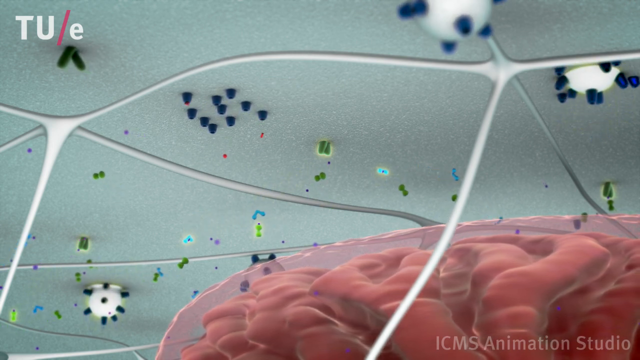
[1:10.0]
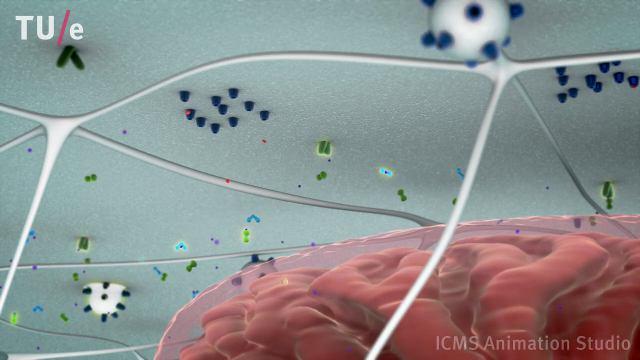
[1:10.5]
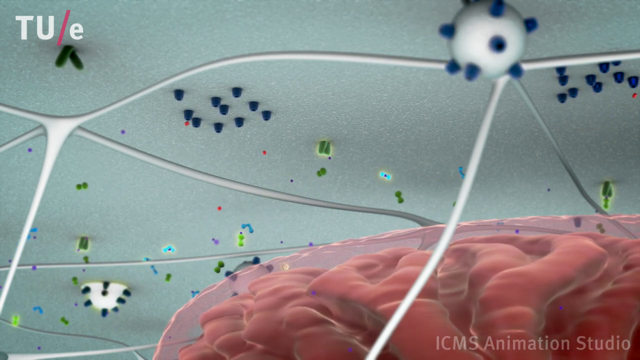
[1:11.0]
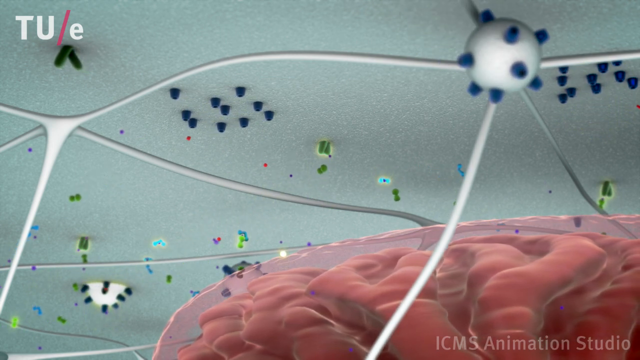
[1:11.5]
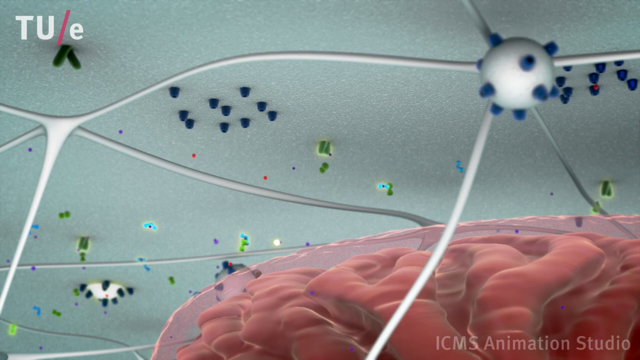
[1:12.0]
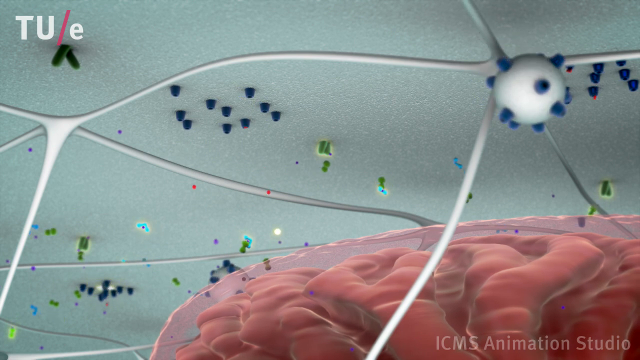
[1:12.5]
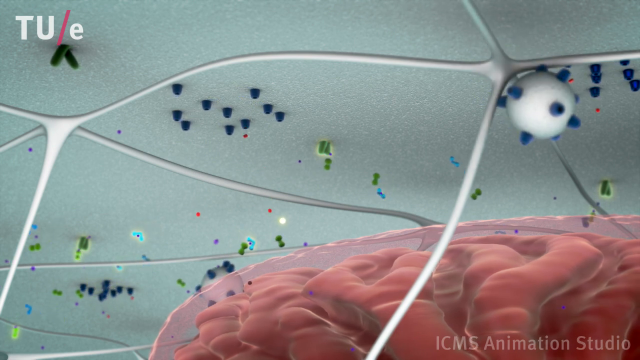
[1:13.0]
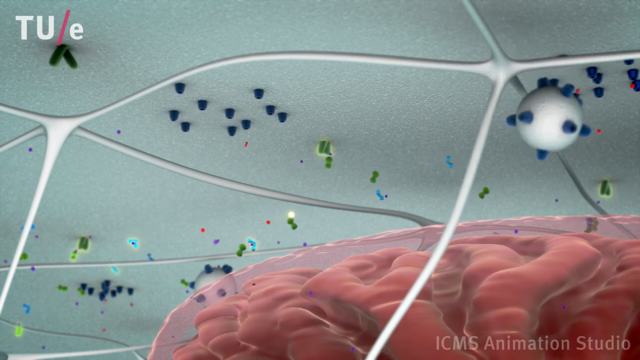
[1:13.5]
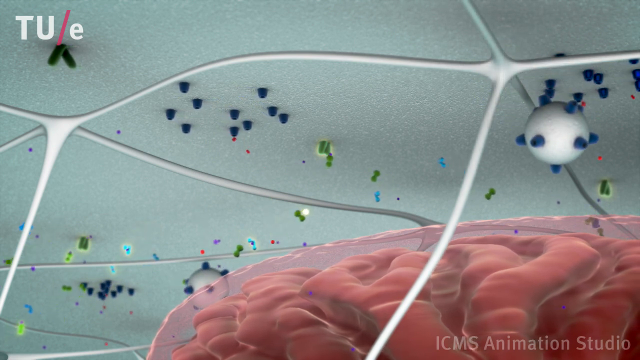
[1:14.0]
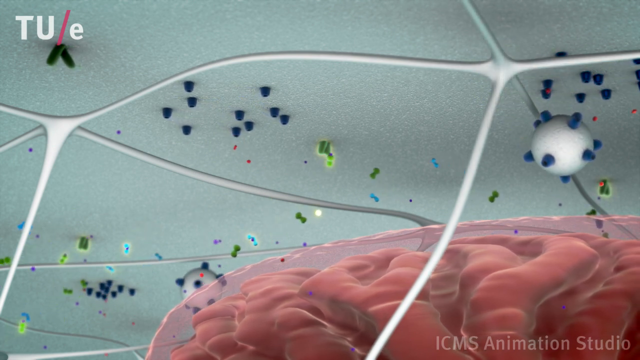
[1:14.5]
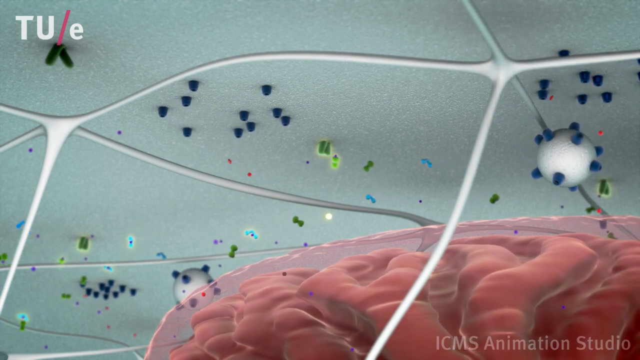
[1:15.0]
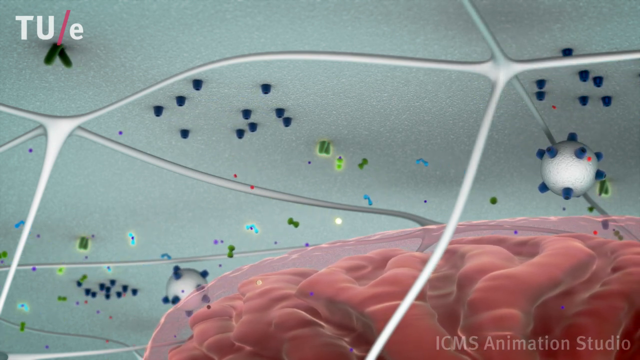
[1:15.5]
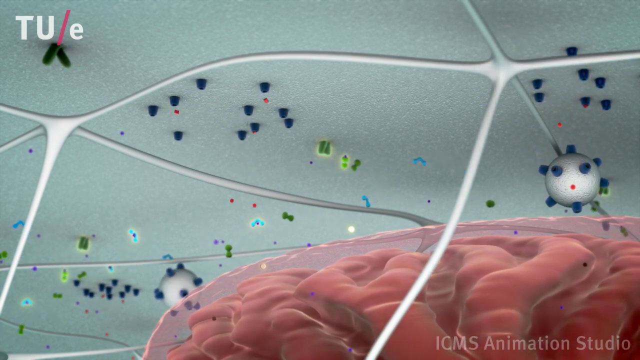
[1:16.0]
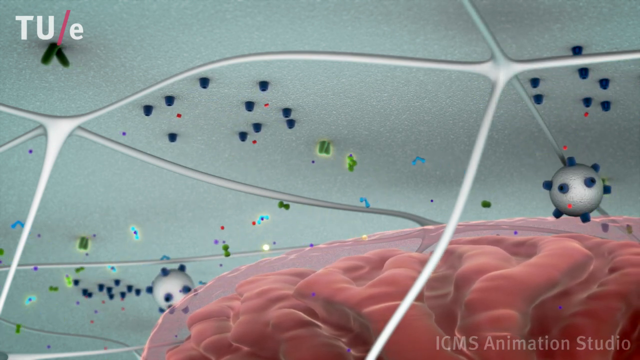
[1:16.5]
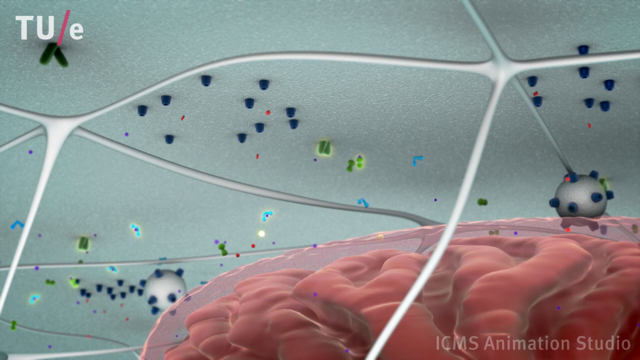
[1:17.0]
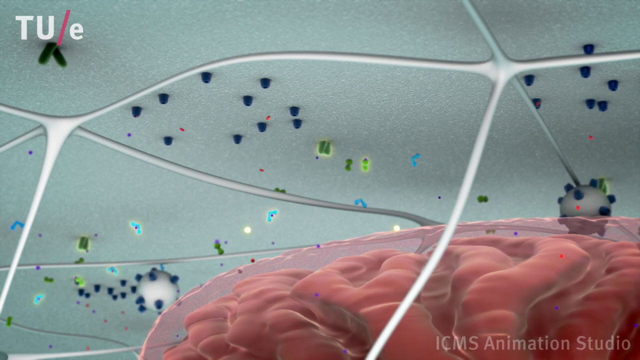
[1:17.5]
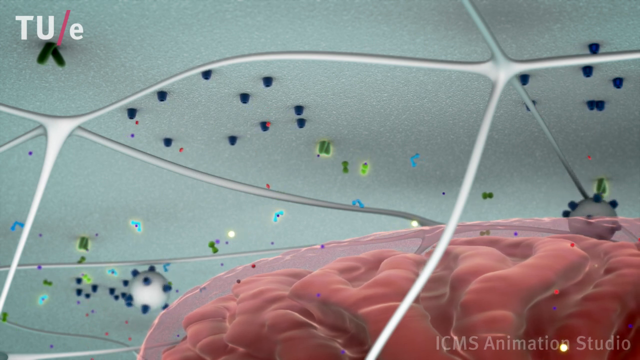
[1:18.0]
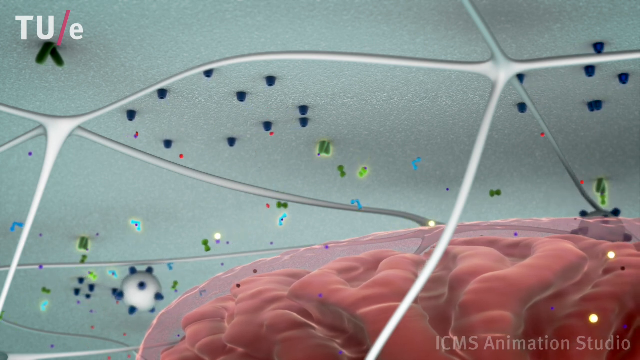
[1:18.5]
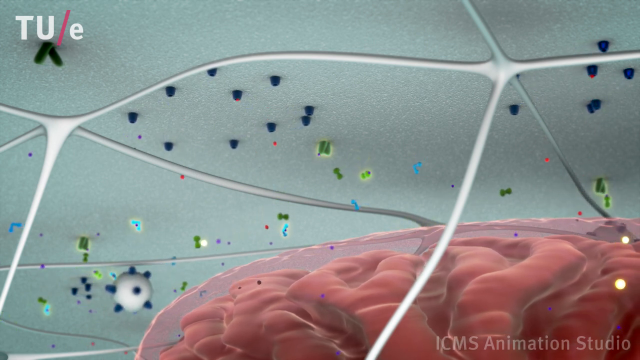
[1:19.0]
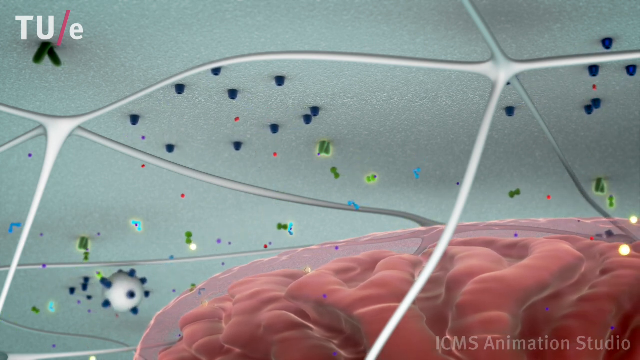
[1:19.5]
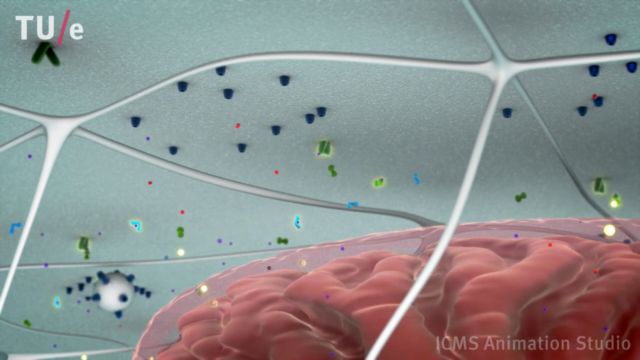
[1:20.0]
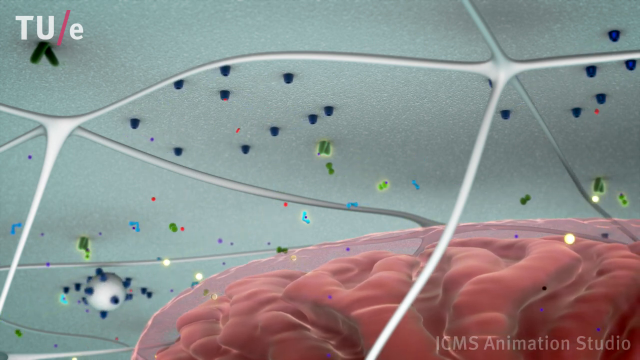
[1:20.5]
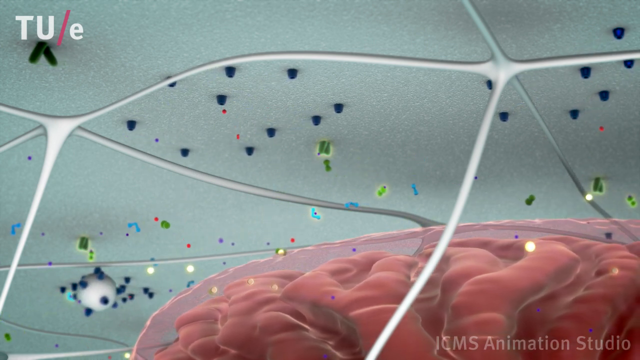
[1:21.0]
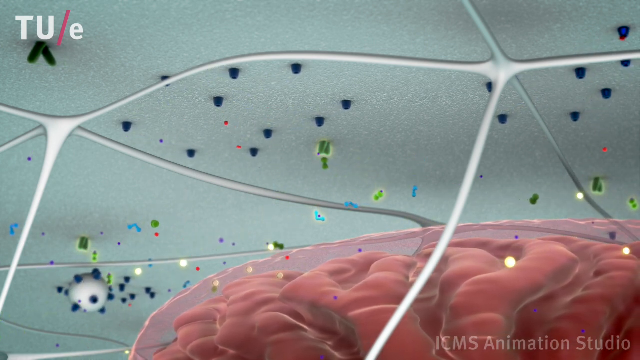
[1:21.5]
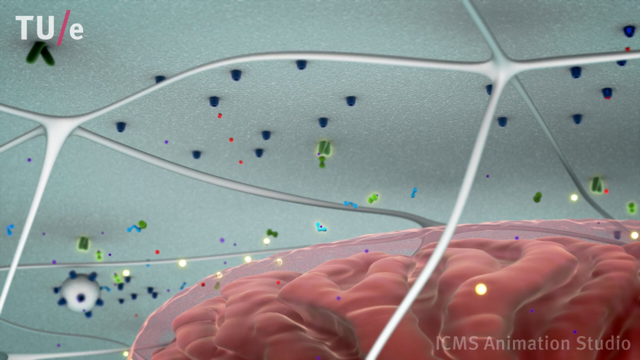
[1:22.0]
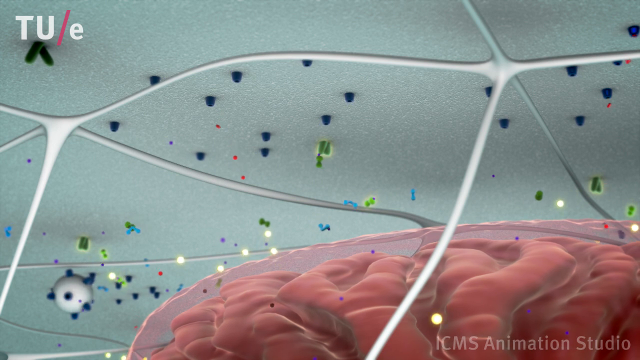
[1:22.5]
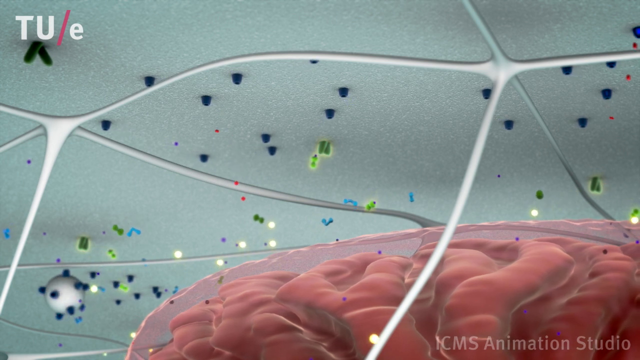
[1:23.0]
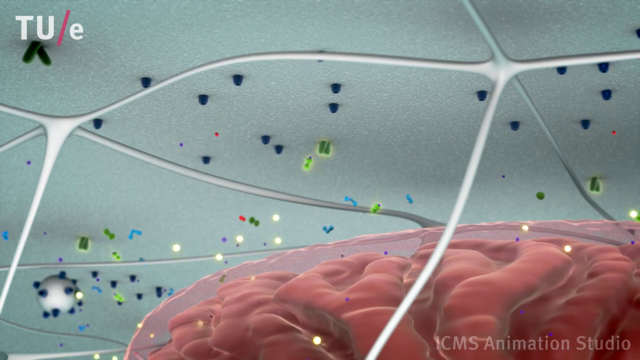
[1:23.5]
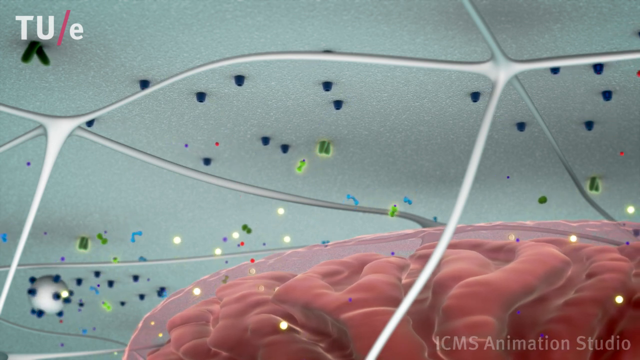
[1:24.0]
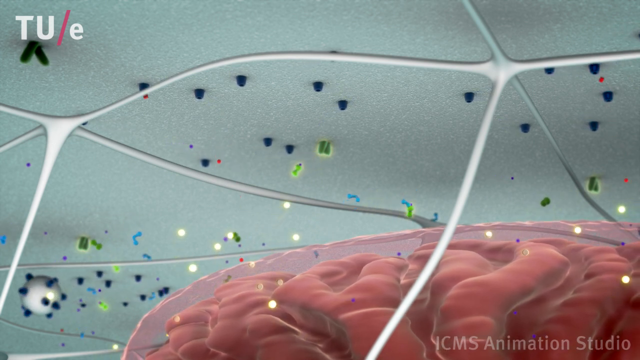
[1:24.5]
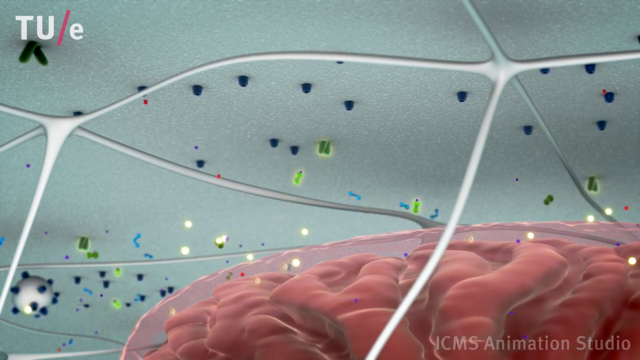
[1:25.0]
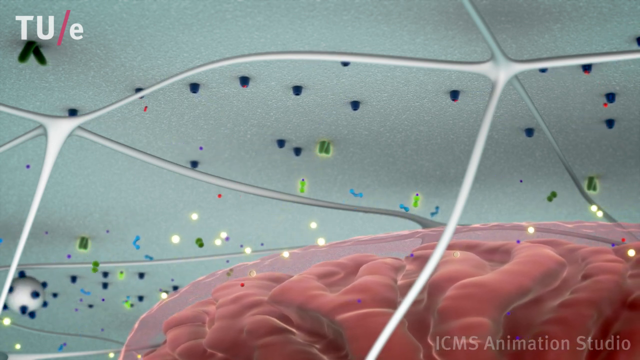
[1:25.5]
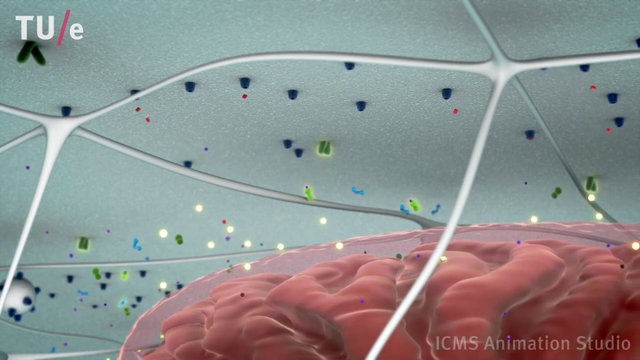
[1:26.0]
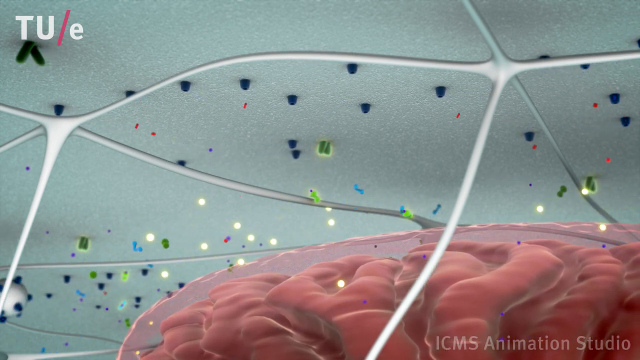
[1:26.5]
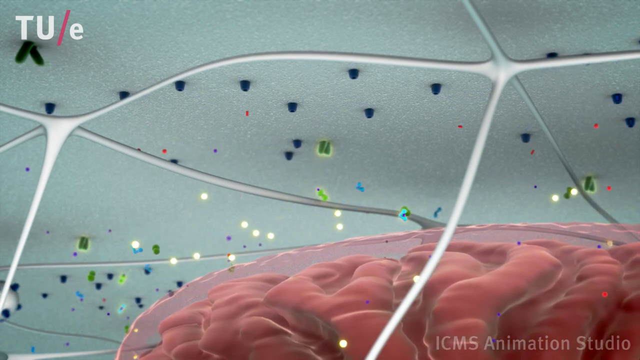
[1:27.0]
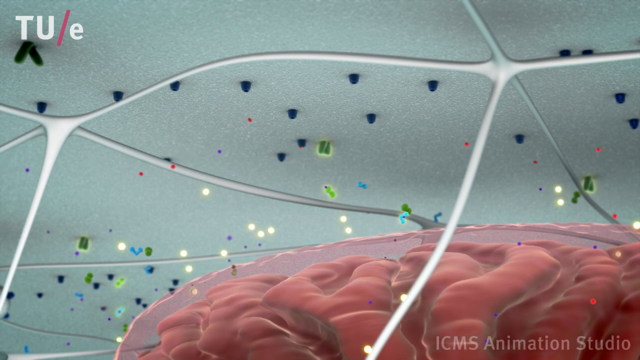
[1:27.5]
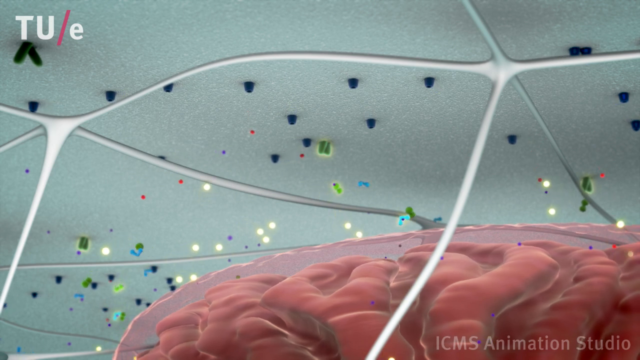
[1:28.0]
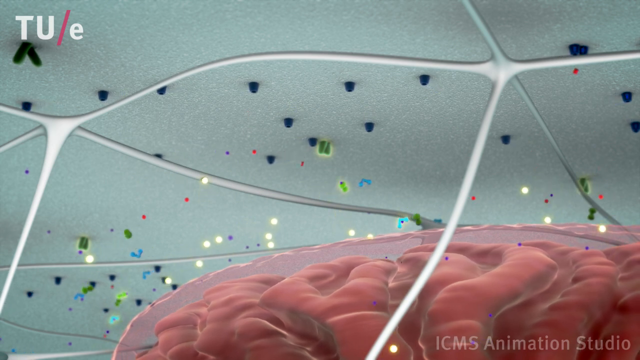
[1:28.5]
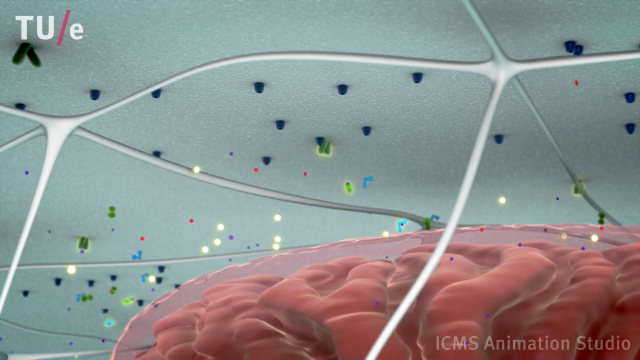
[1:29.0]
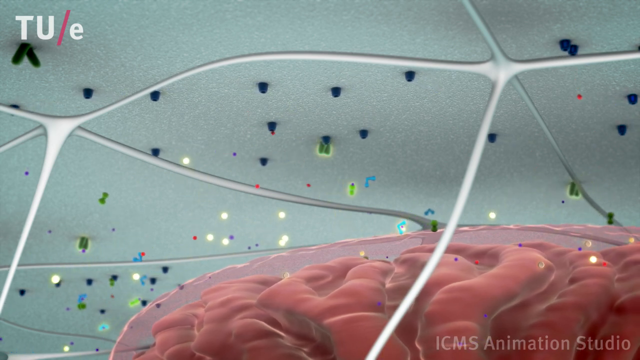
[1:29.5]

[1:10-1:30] A diagram shows liposomes and fusion taking place within the muscle groups, with activity going round and round. Each piece is labeled differently, and things are color-coded as they move through the muscle groups. The content is credited to the University of Technology.